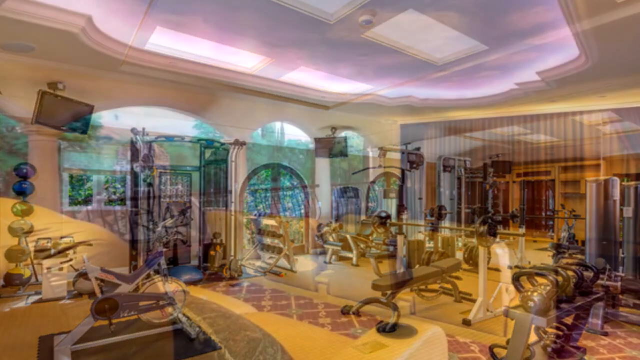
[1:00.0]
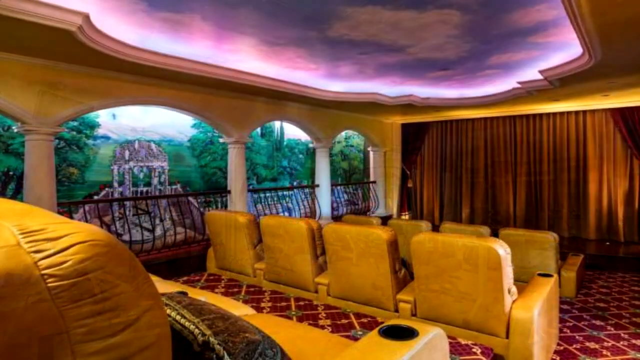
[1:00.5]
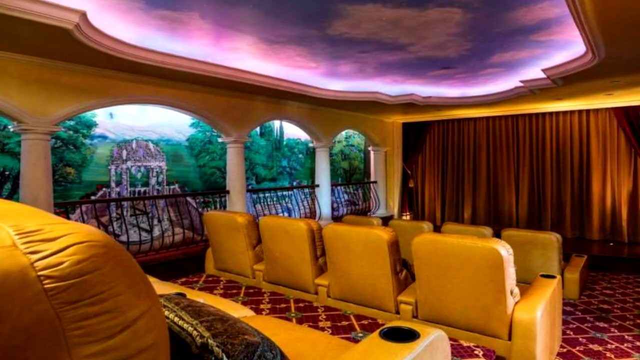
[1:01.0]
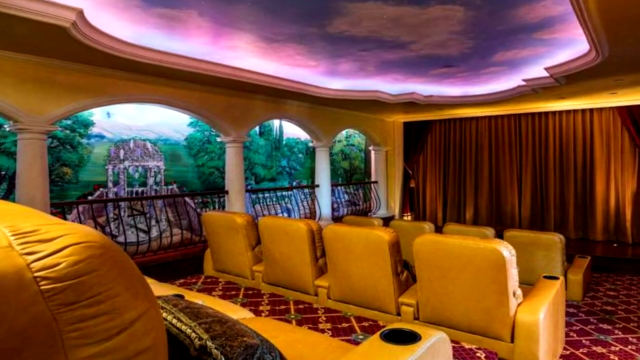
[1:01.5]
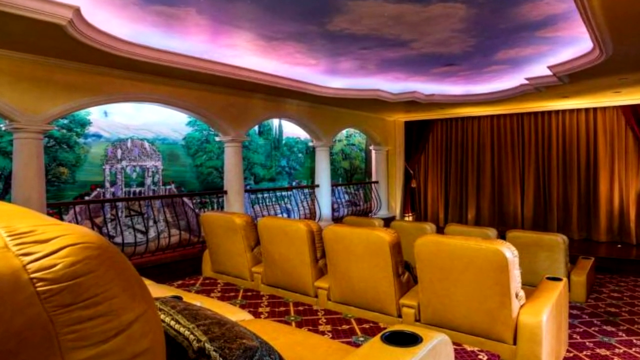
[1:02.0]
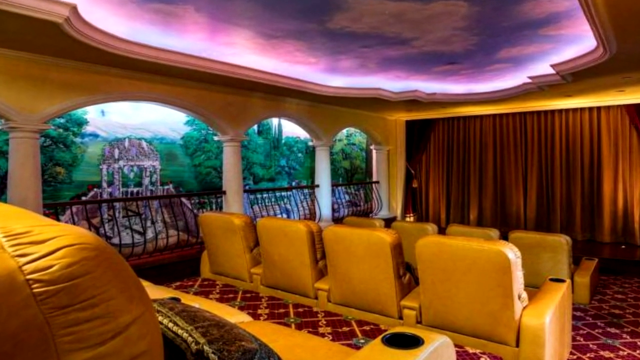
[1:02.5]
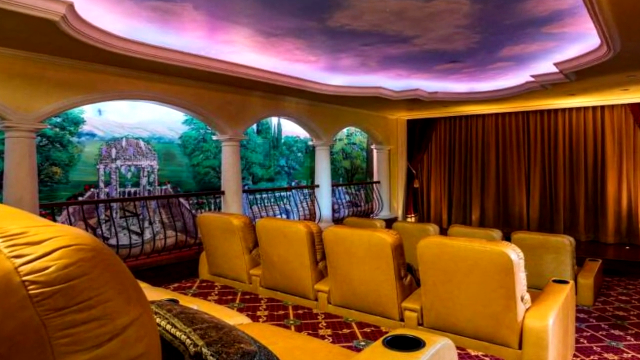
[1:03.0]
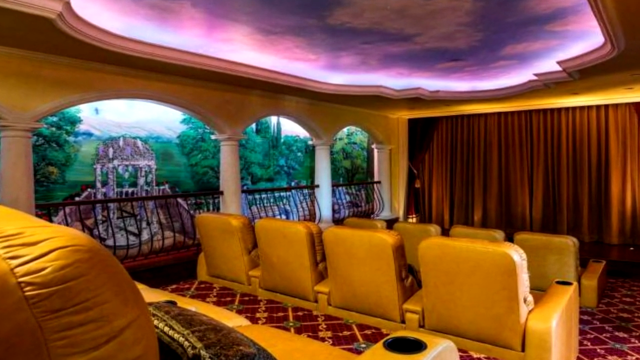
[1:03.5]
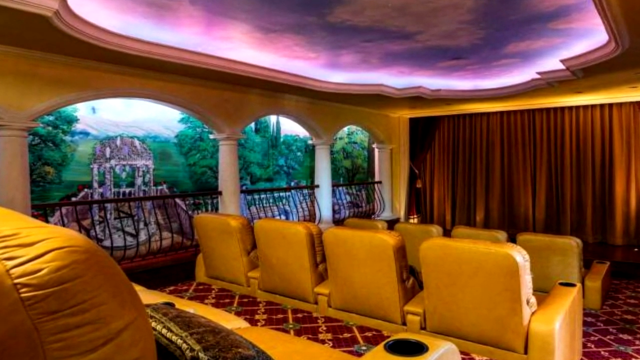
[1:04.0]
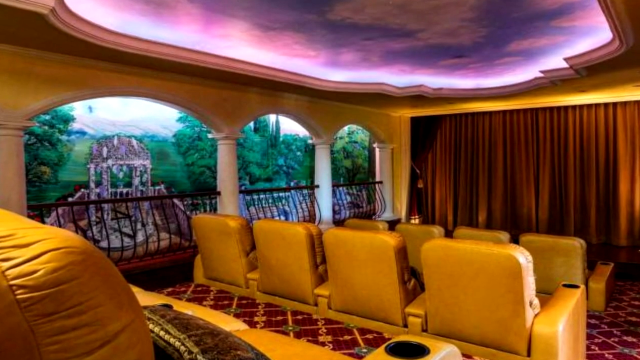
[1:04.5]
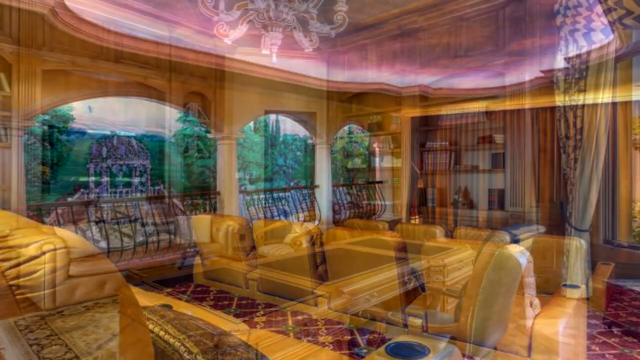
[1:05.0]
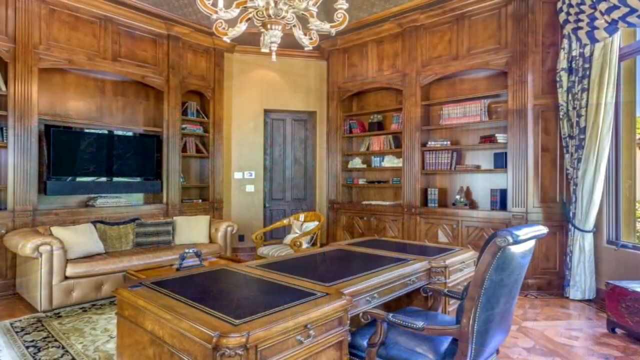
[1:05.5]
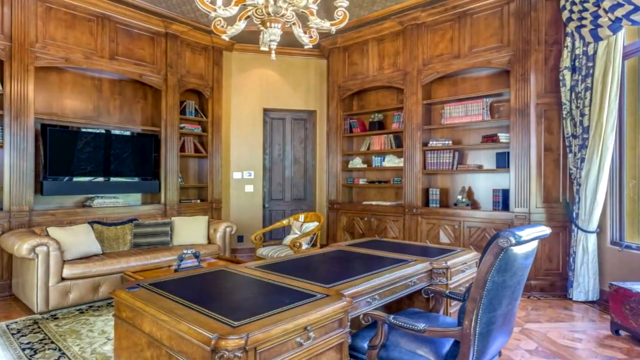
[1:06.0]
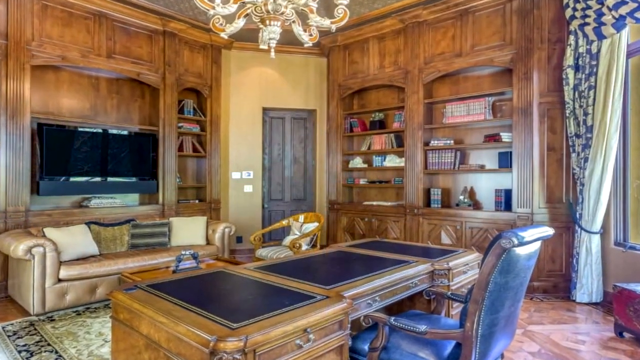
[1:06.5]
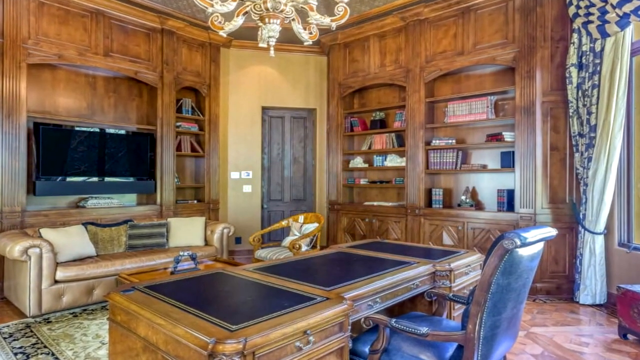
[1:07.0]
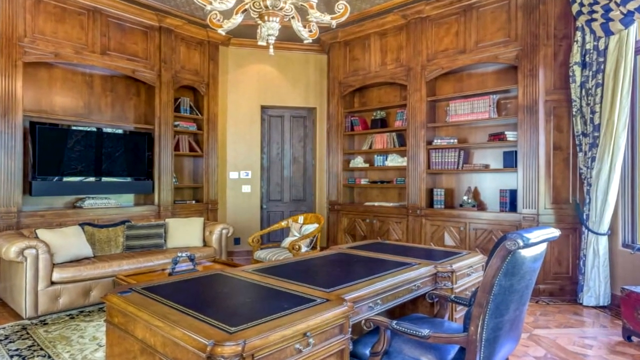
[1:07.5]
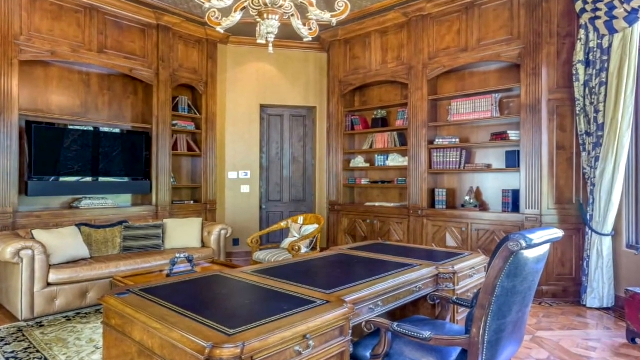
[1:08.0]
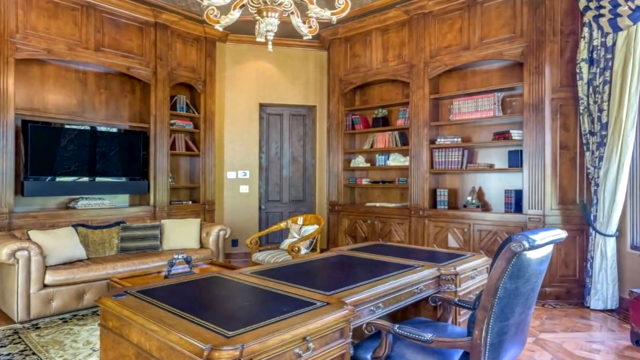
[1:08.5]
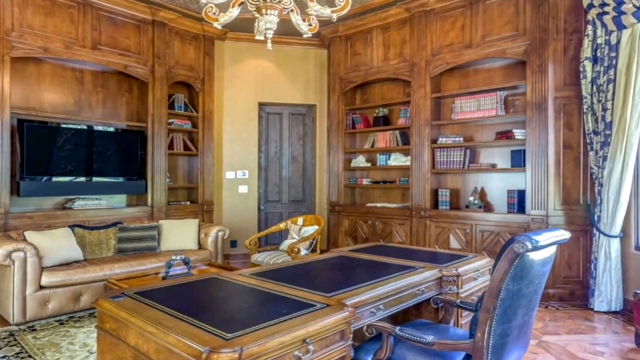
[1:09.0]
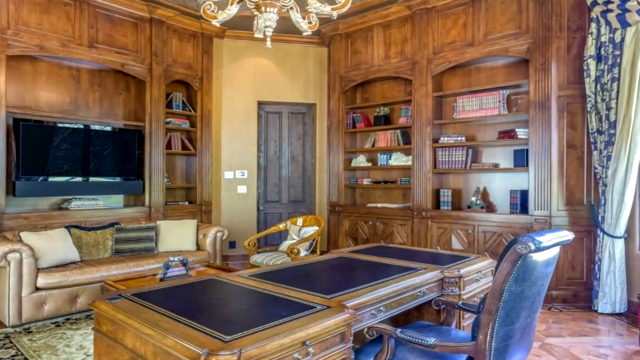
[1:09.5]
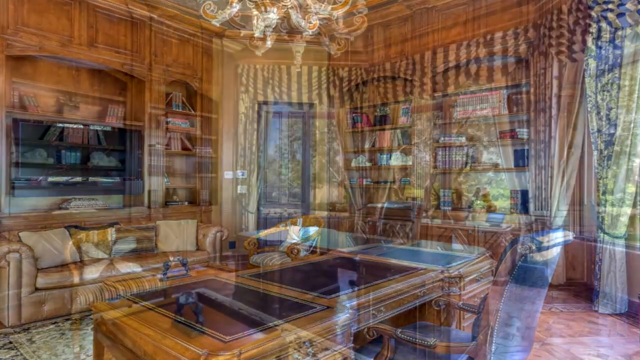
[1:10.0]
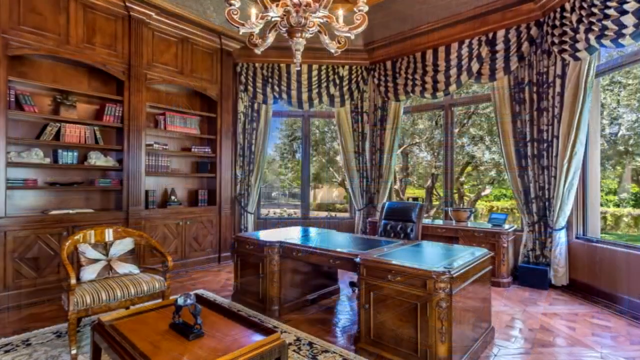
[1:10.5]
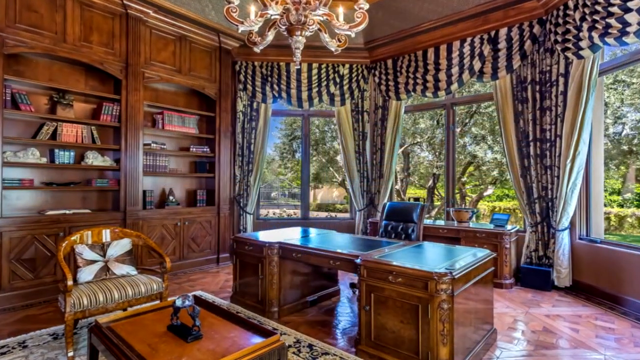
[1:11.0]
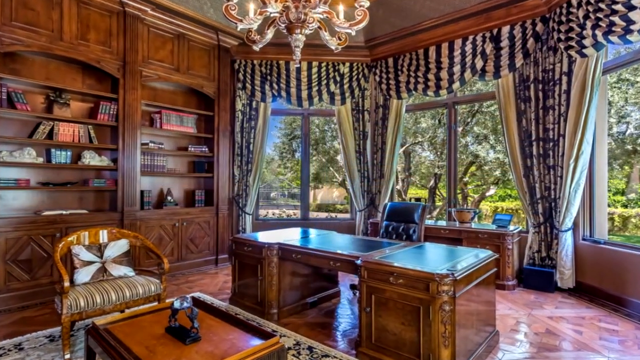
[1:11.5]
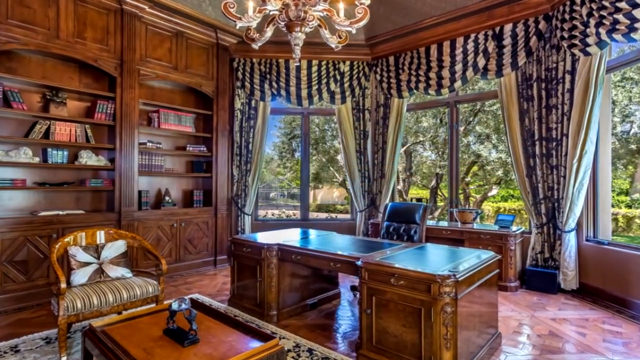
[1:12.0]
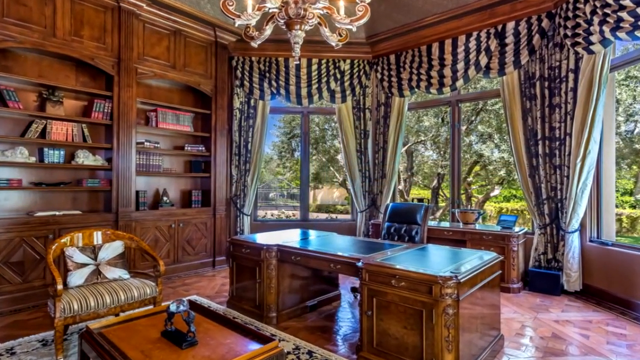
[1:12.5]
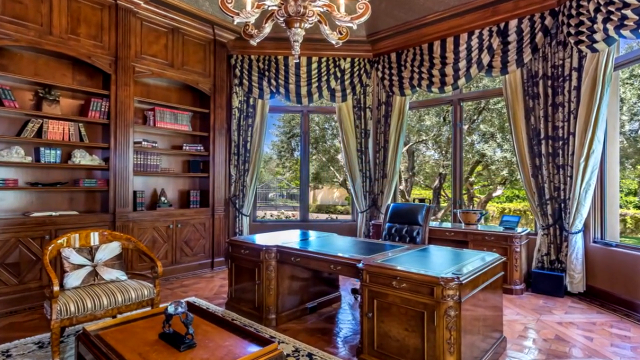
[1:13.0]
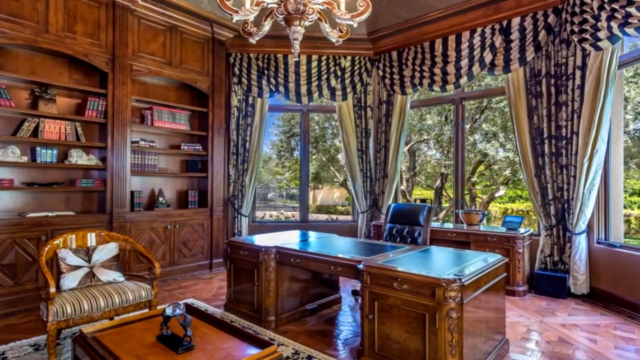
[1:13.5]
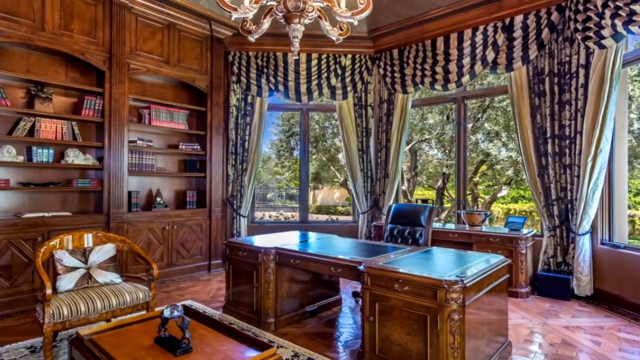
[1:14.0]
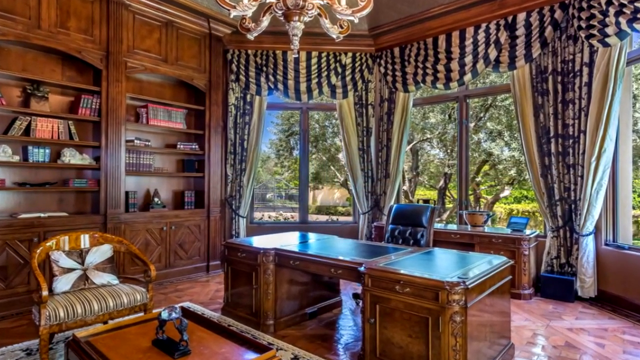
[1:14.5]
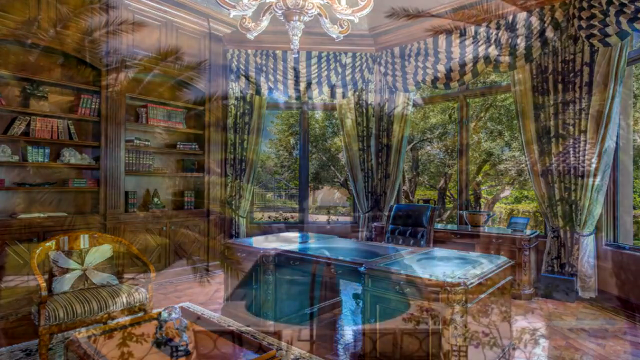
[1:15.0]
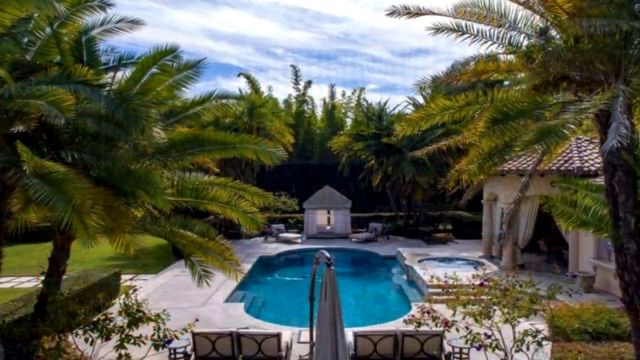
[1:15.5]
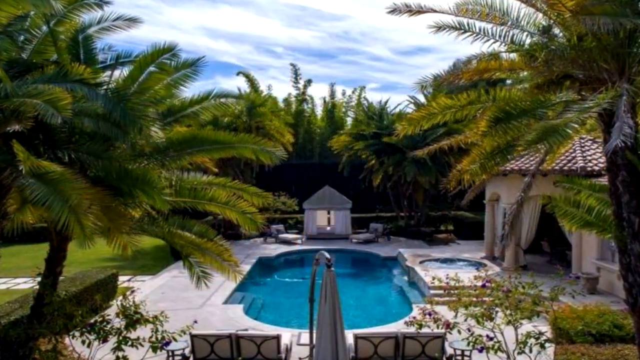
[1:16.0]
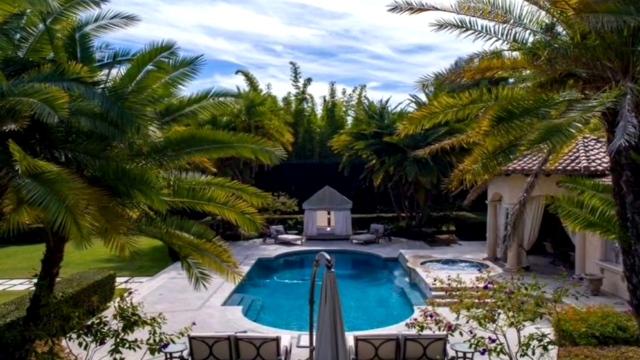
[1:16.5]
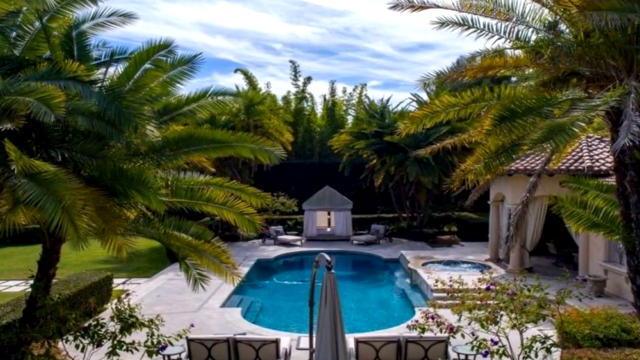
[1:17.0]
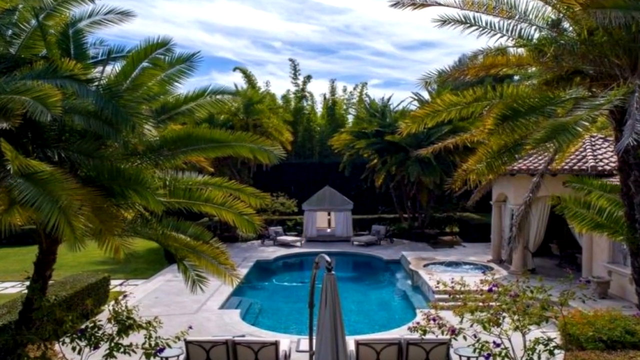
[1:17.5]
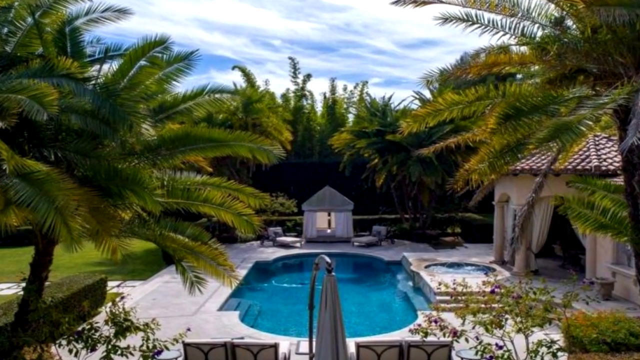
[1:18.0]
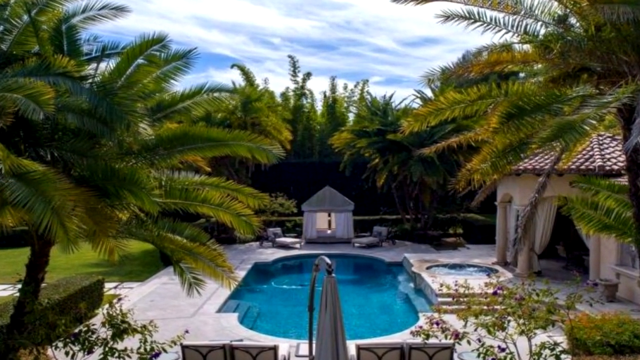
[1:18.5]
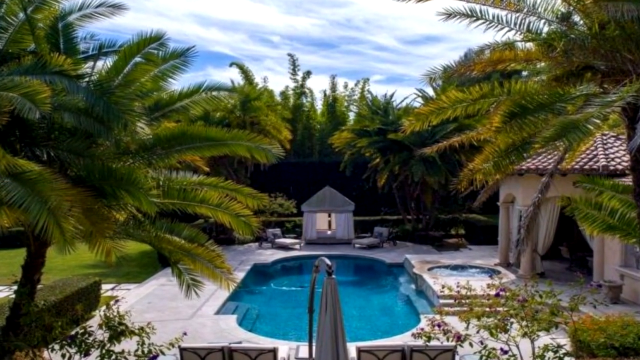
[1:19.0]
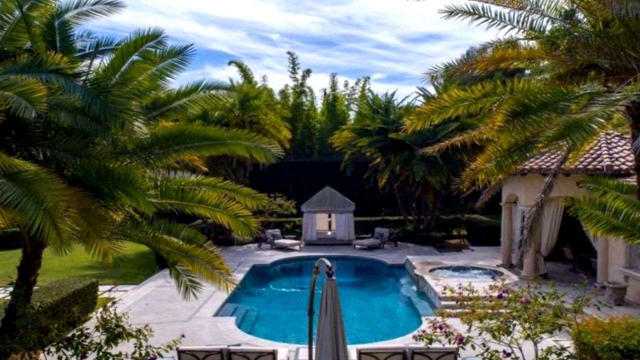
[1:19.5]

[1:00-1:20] A picture shows what appears to be a movie room in the house, with about eight leather movie theater-style seats and a drape that is probably in front of a large screen that sits in the front of the room. To the left are three open arches, and part of the ceiling is a pink translucent neon area. Next is what appears to be a study area, with bookshelves in the background attached to large brown cabinets and a flat screen TV in the background set in a large brown cabinet. A brown desk has multiple black mats on top, a blue chair is behind the desk, and a brown sofa is beneath the TV. Another view of this study area follows, and finally there is an aerial shot of the pool area.